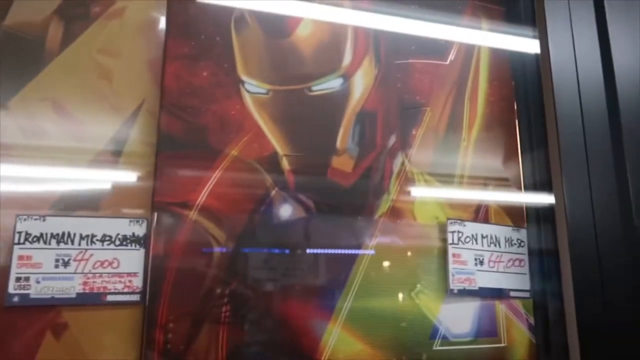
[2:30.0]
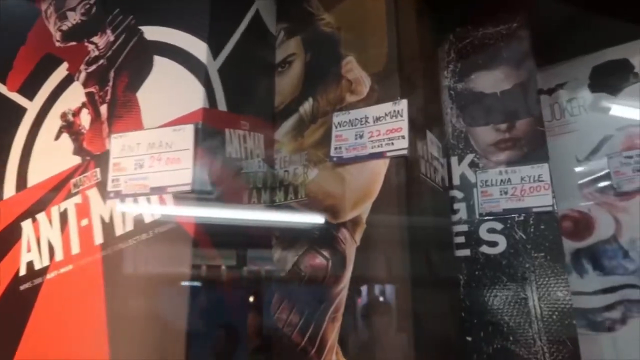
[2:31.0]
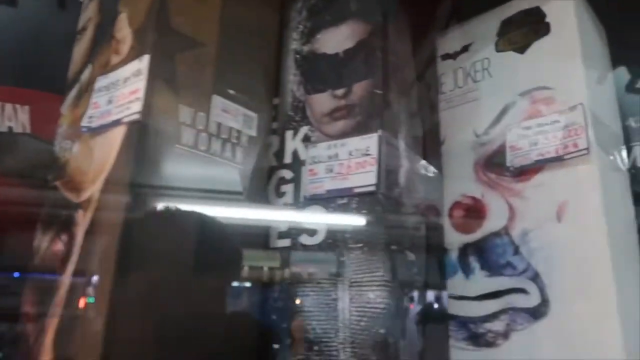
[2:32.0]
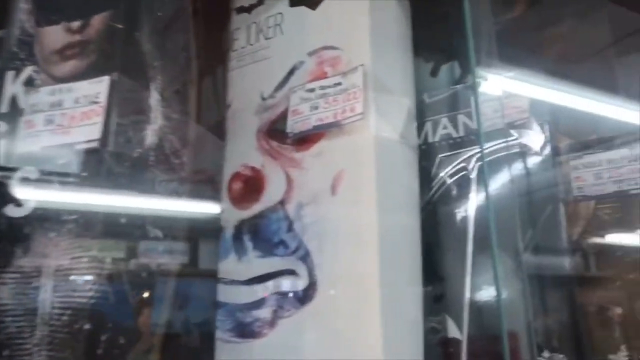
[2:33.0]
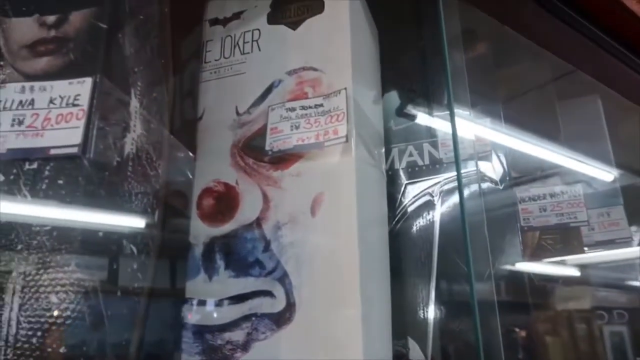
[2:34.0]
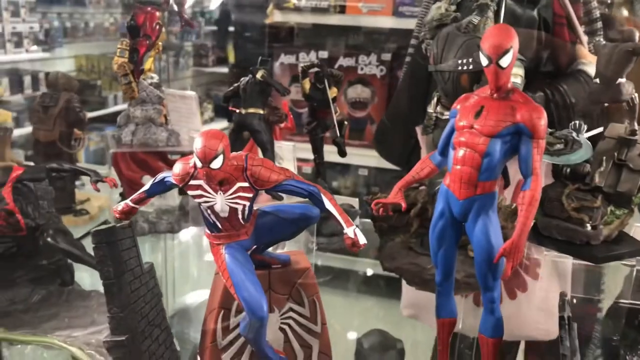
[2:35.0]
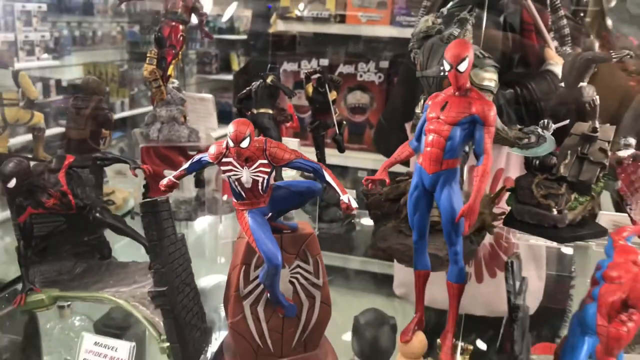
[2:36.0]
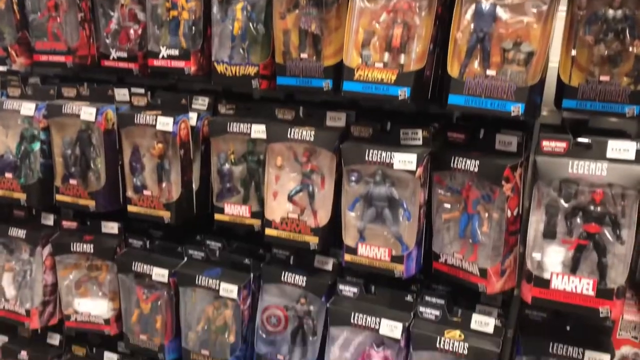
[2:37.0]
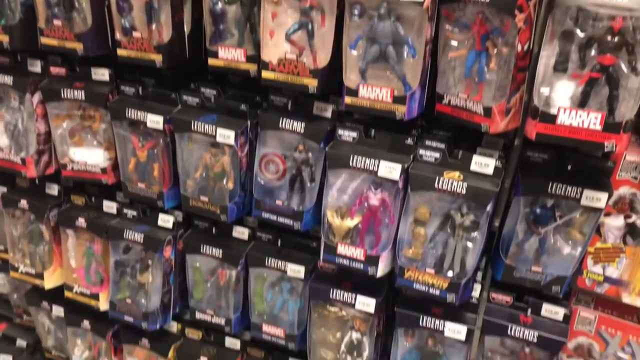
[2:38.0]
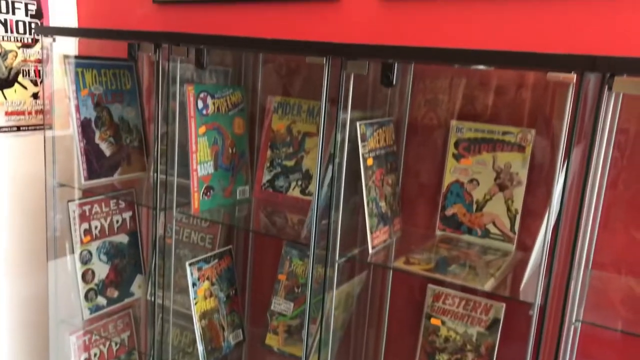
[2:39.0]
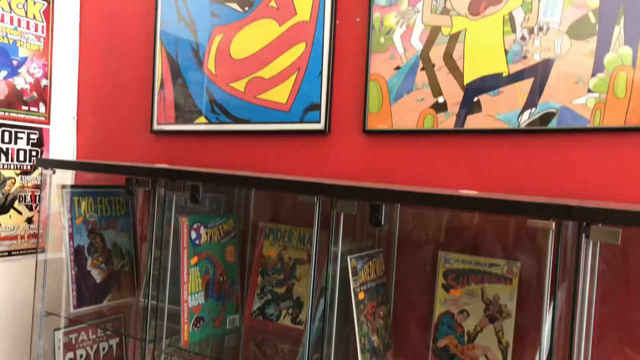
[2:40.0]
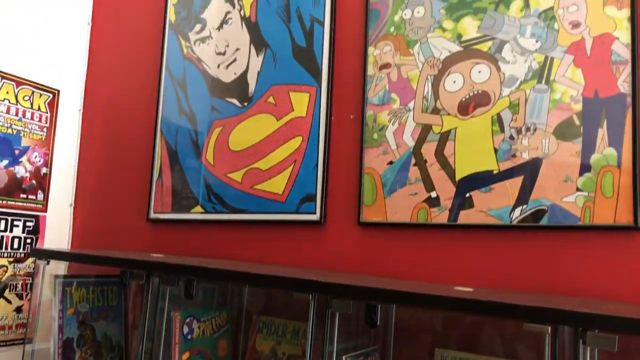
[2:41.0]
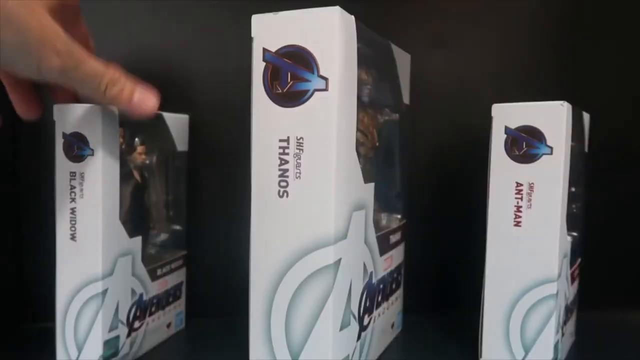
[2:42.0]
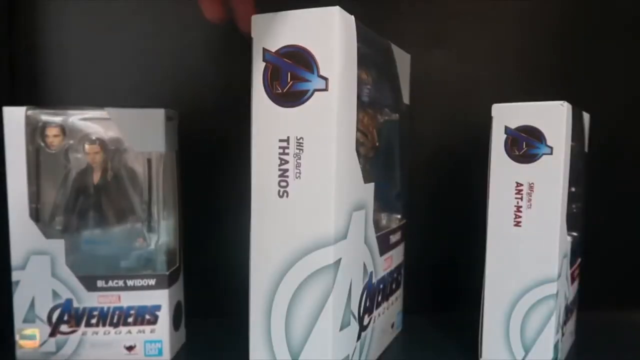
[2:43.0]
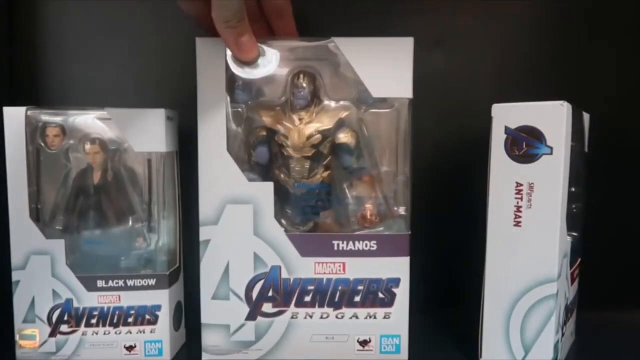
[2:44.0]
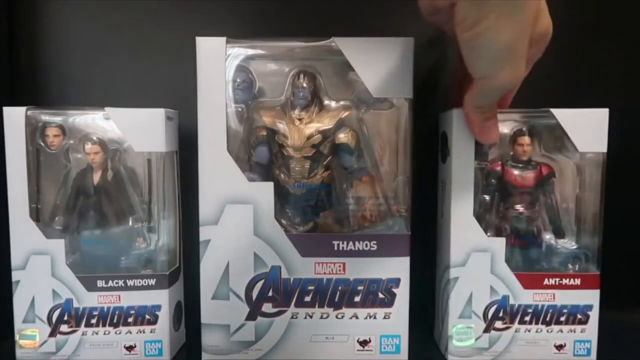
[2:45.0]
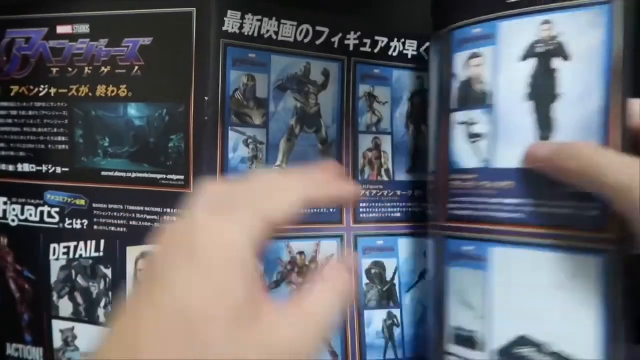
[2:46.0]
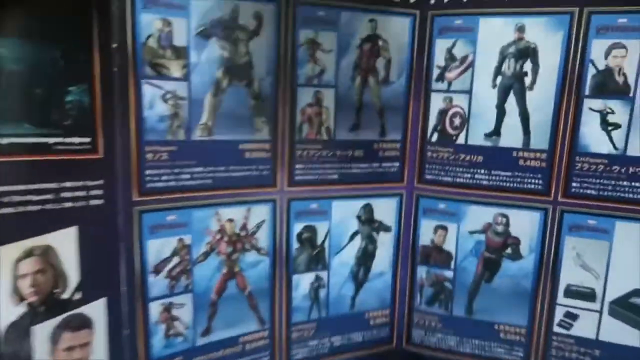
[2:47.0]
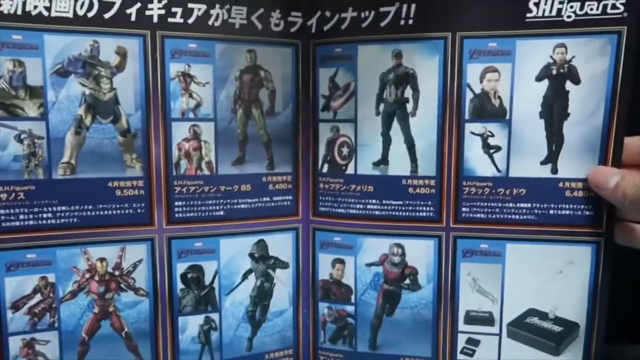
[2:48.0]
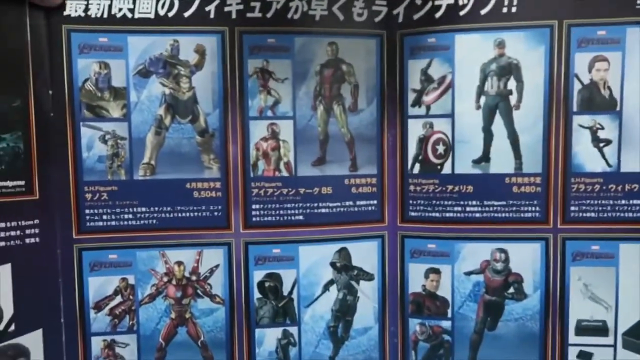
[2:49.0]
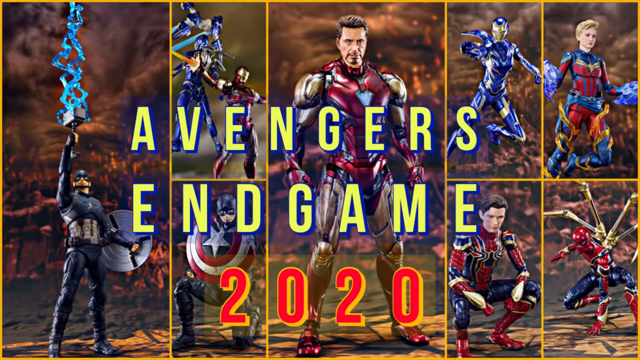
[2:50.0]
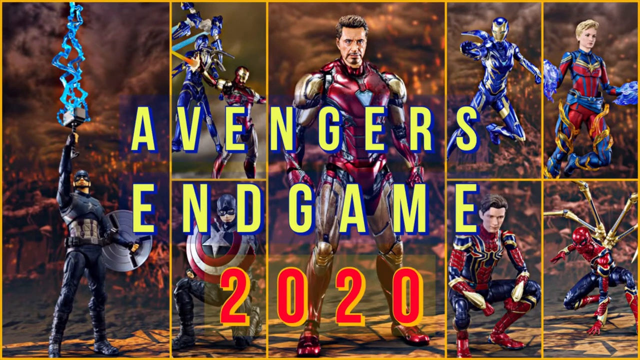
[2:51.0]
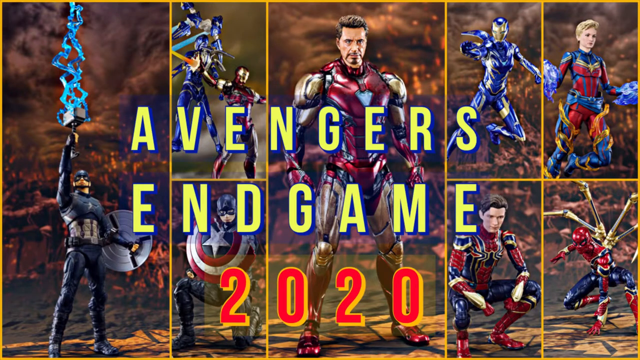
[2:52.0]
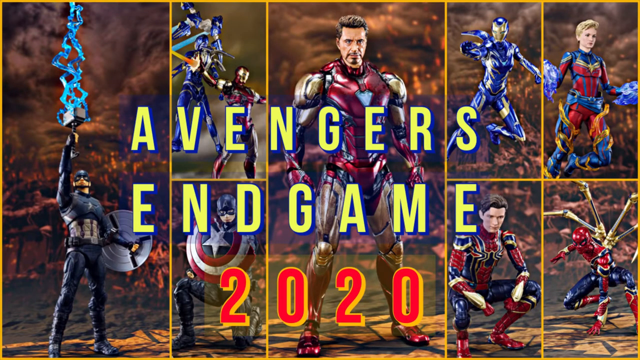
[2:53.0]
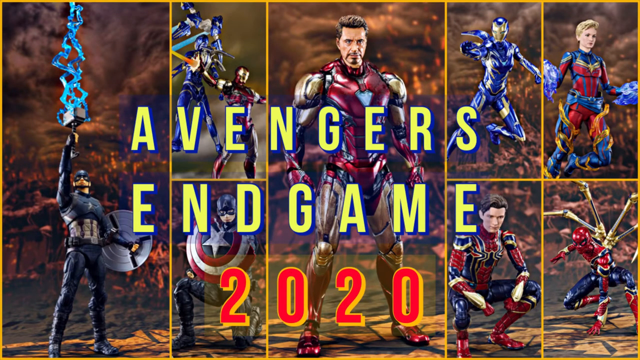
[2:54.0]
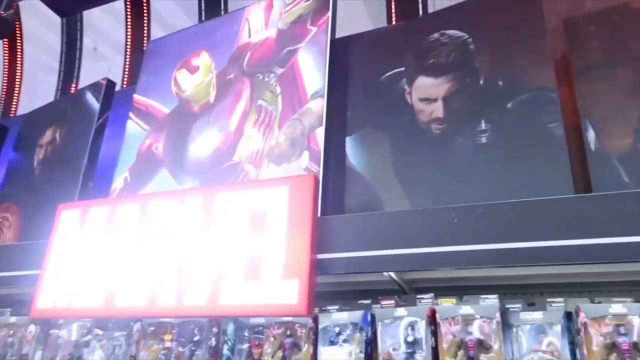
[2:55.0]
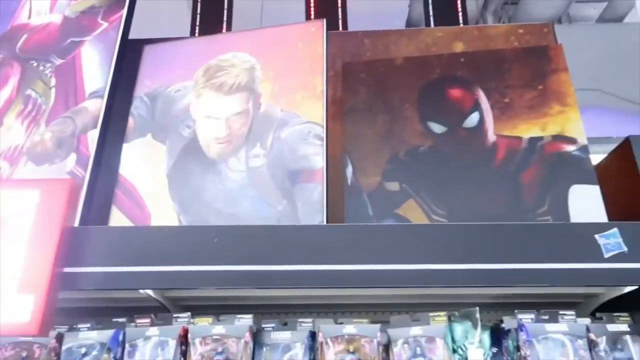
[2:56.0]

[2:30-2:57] Video footage moves from Marvel boxed figures to boxed figures from other properties inside a glass case, then to Spider-Man figures in a glass case, including one from the video game. Next is a wall of boxed Marvel Legends figures that seem to be hanging along the wall, not in the glass case. Another glass case holds comic books, including old EC Comics, Marvel Comics and DC Comics like Superman, and wall art is shown. A review video follows, reviewing boxed Avengers Endgame figures and showing the Avengers Endgame line from Figure Arts. Near the end, all the Avengers Endgame figures are shown in one view, and the video ends by showing the Rebel Base booth in general.